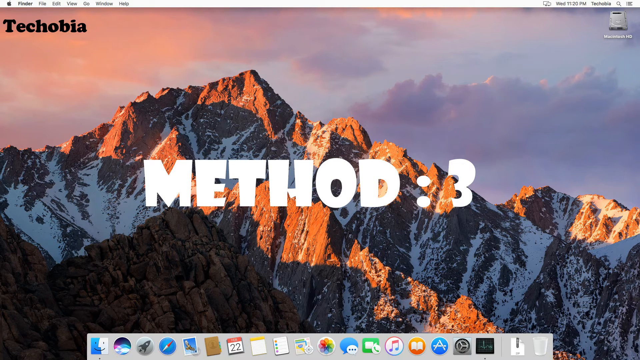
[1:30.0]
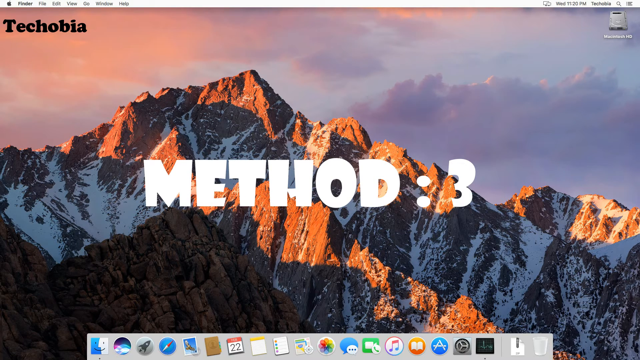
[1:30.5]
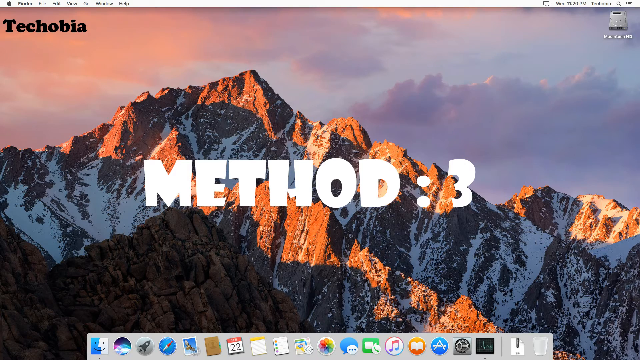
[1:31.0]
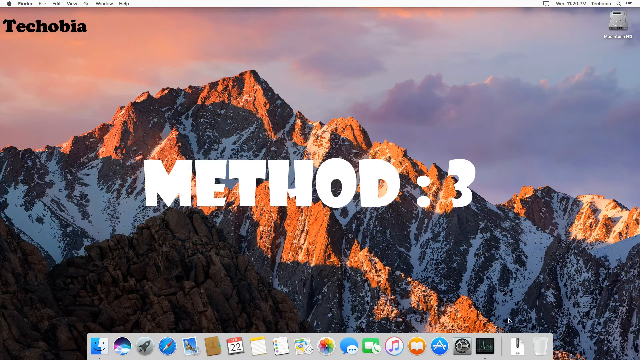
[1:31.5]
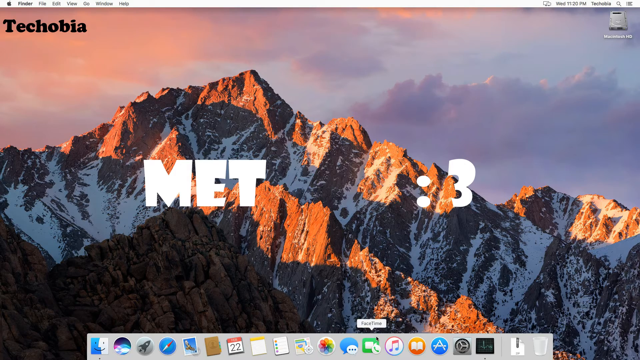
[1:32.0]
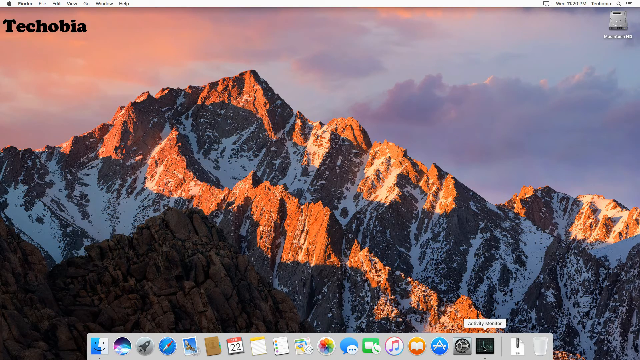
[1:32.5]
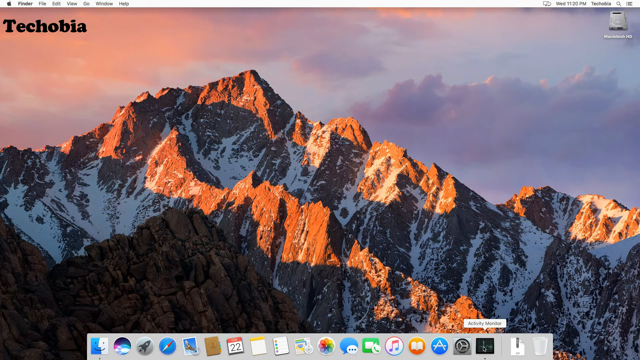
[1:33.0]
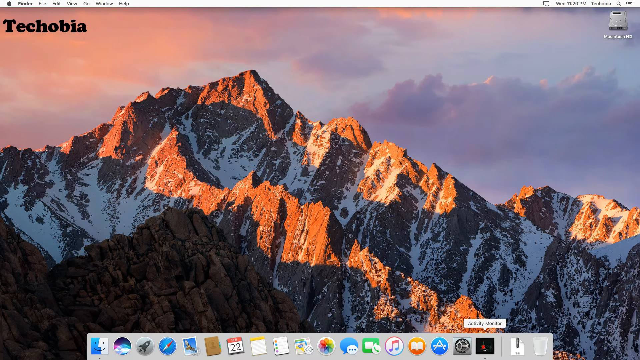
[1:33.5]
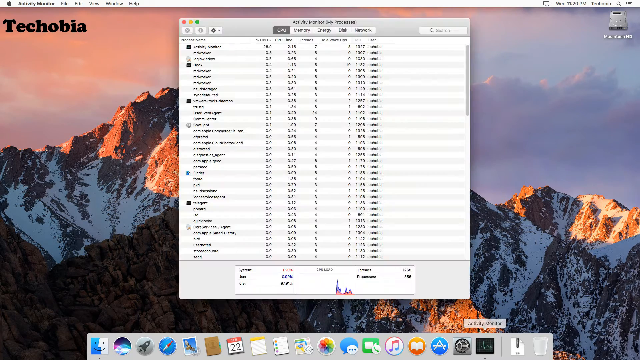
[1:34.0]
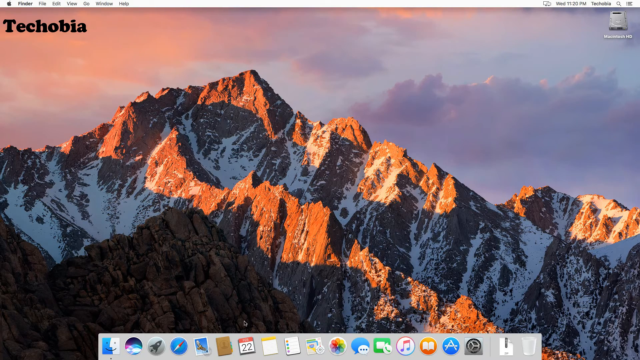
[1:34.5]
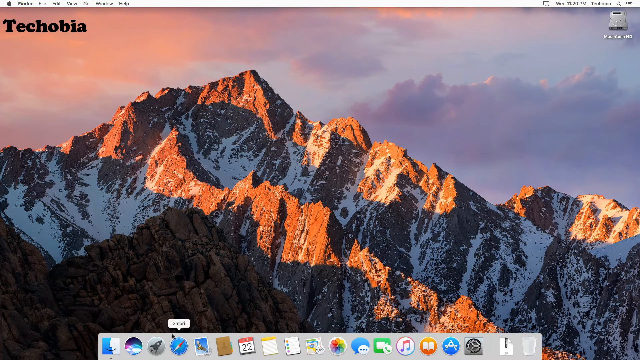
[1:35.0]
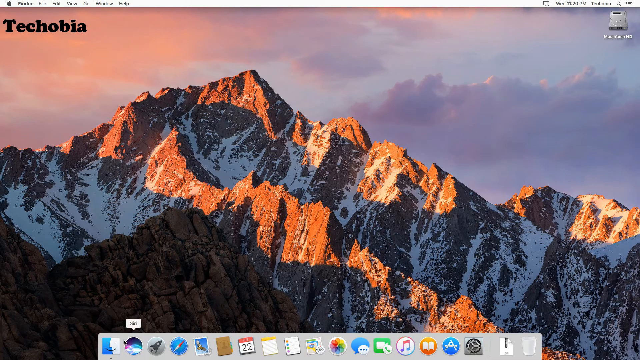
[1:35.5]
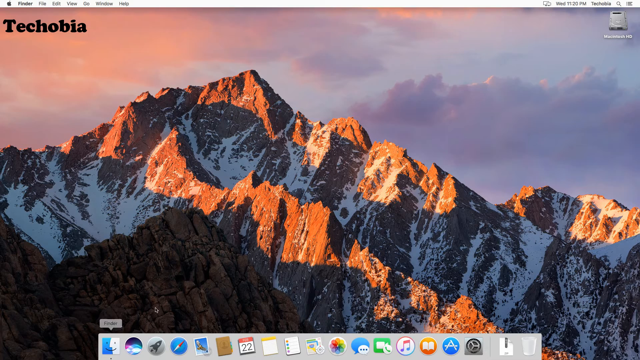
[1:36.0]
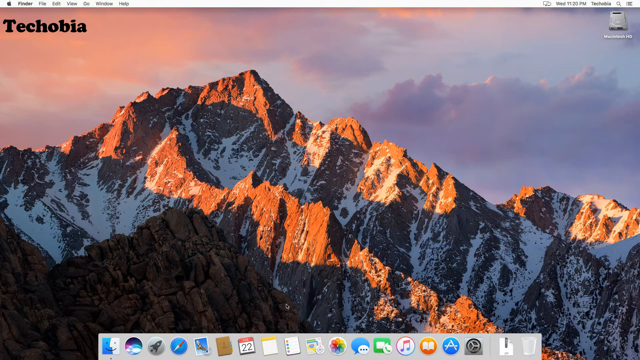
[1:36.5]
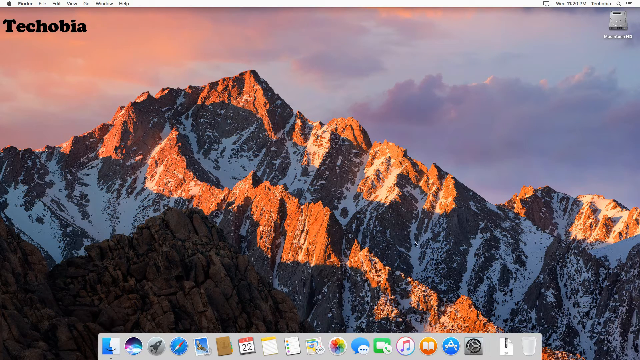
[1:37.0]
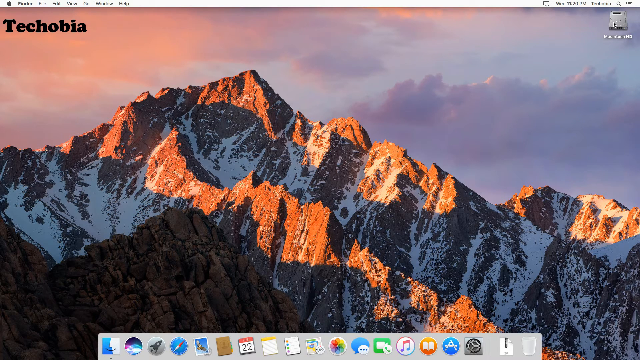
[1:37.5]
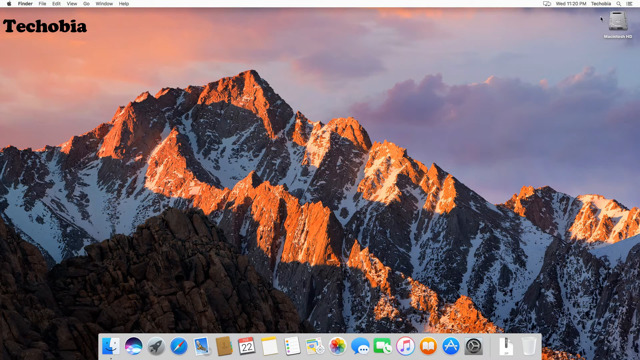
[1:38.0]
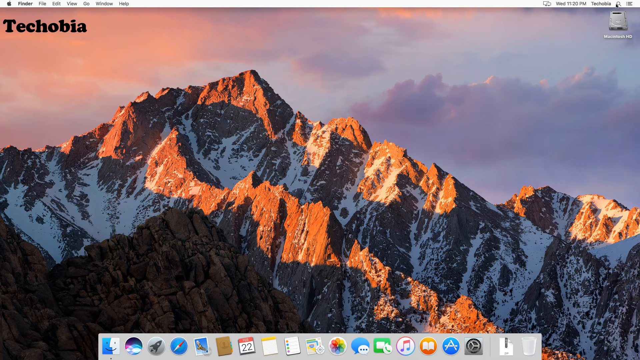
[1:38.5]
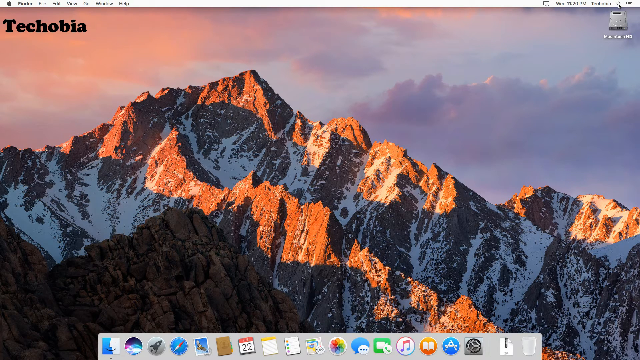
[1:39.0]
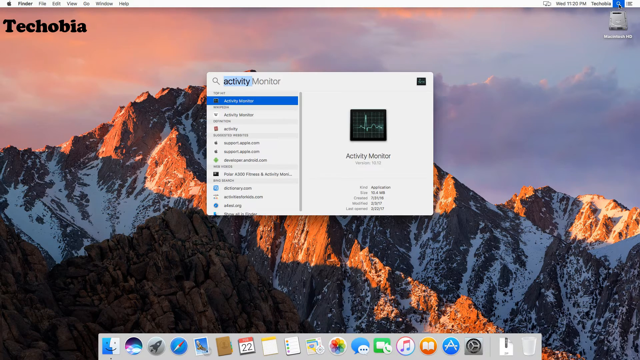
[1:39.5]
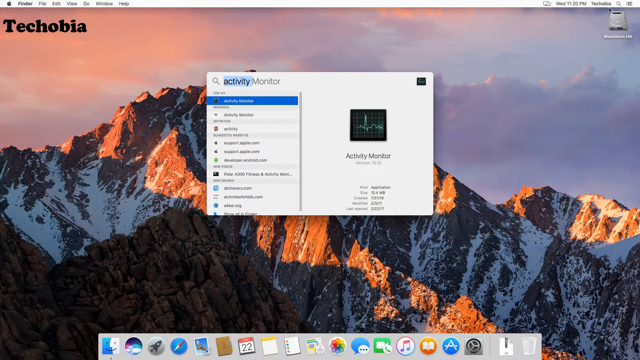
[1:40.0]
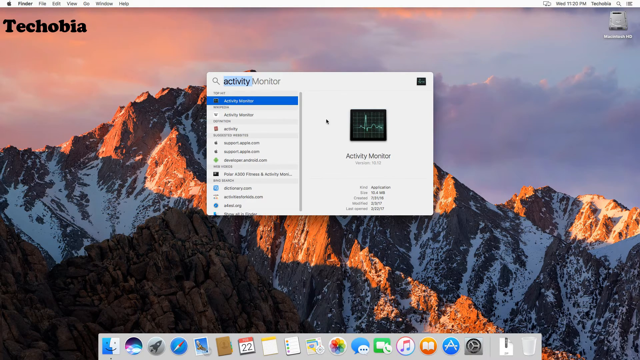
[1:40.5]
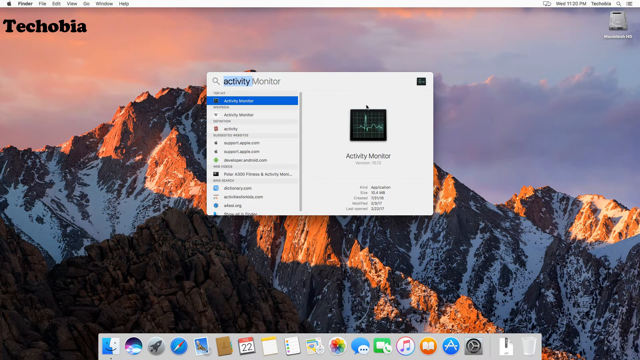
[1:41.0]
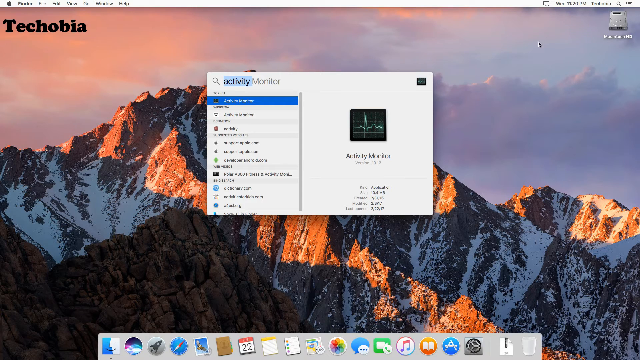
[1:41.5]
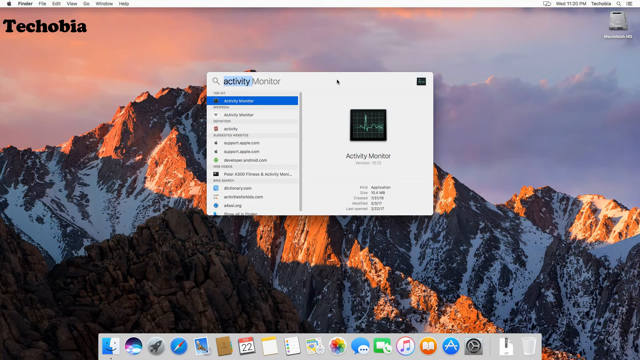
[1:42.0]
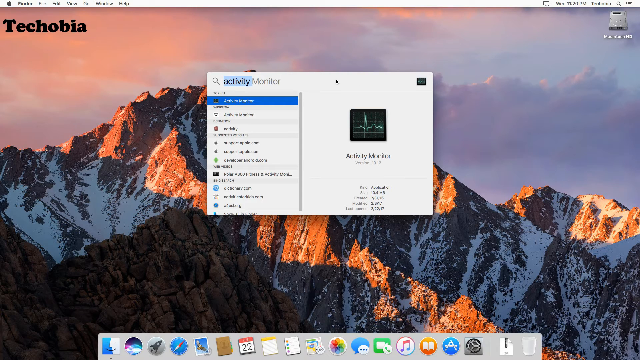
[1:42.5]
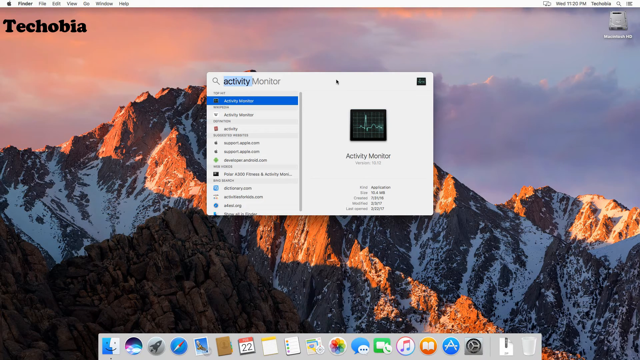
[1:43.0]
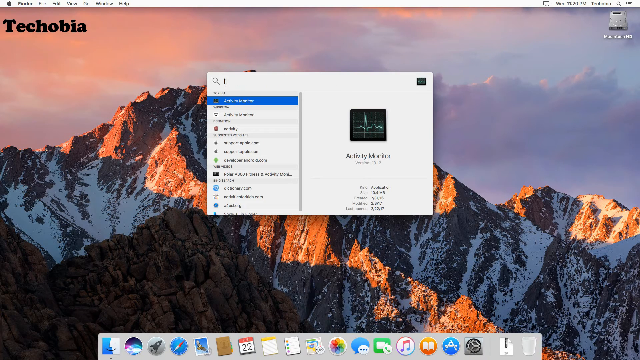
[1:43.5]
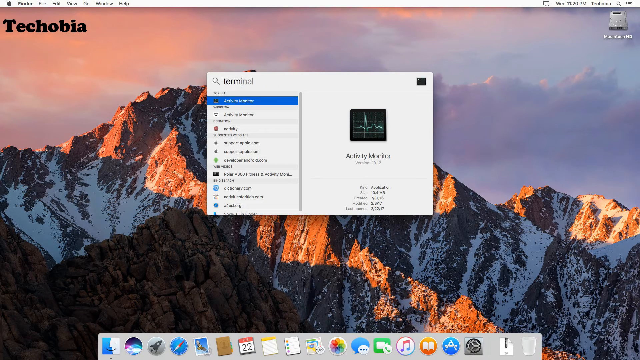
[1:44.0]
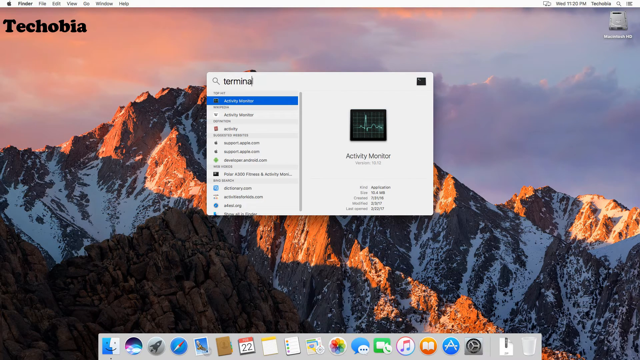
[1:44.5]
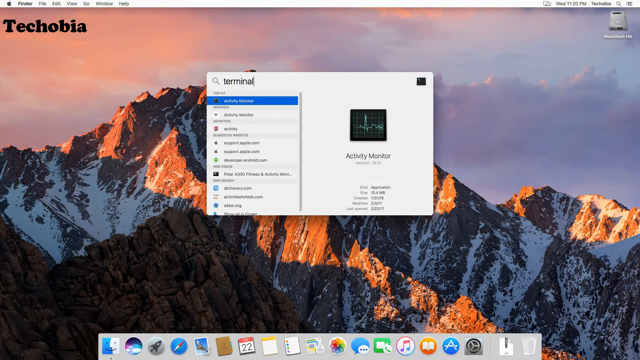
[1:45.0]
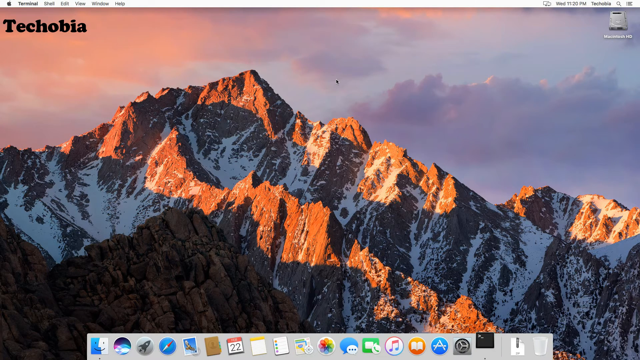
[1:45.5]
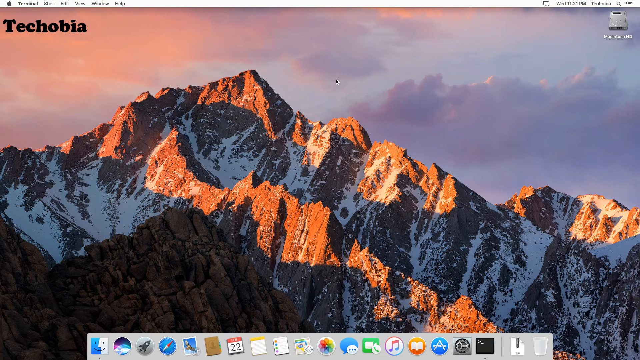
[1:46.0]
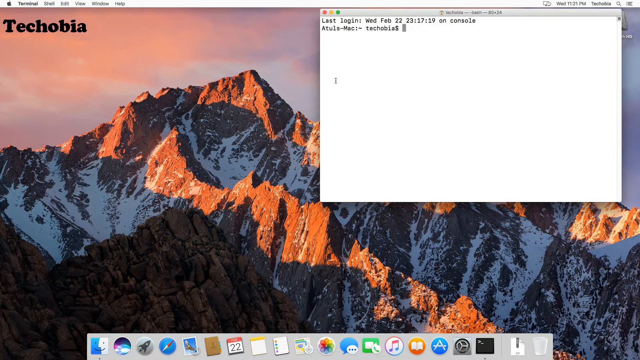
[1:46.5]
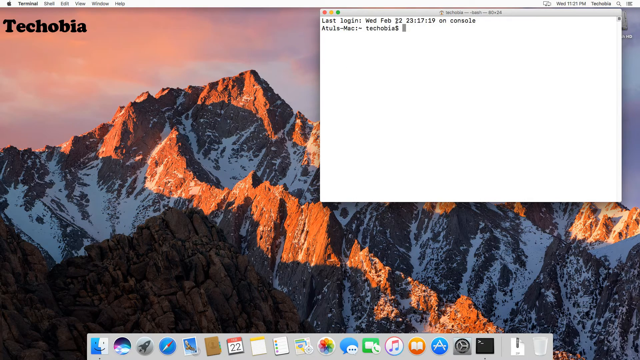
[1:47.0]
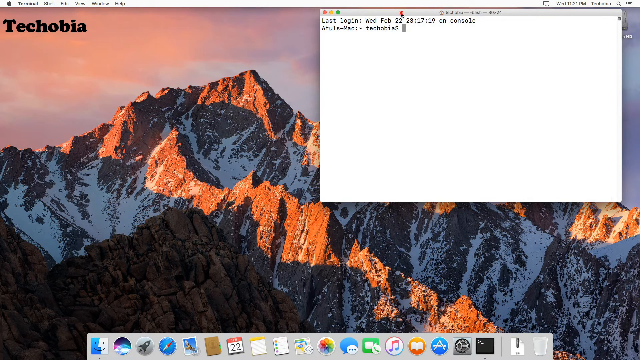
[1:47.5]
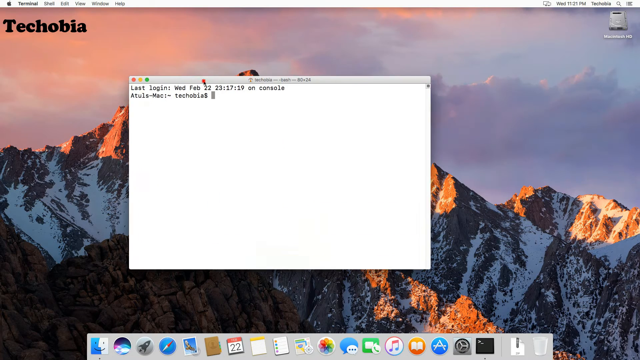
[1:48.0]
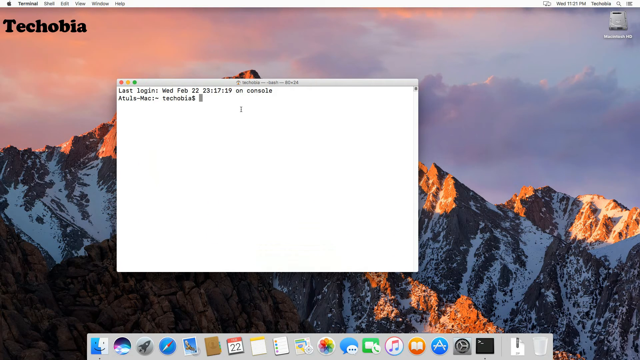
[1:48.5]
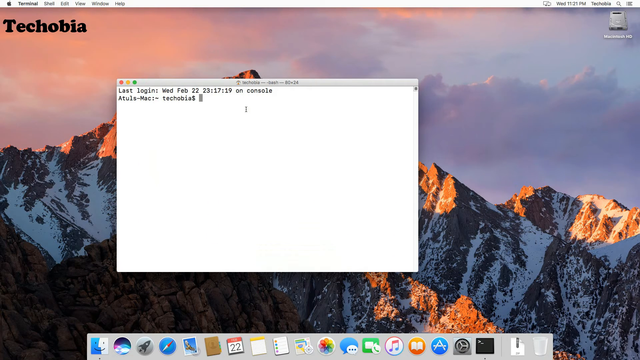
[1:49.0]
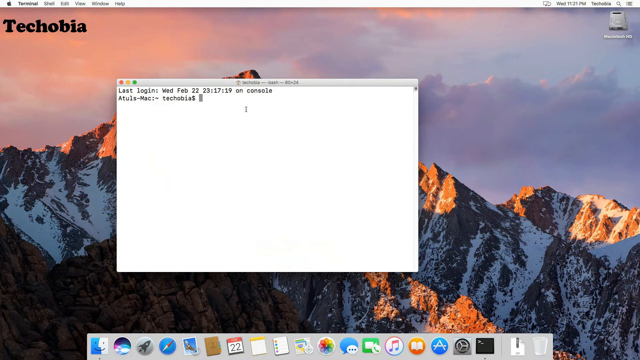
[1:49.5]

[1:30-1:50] The words "method: 3" are on the screen and wipe away after a short time. A menu pops up, flashes quickly, and disappears. His mouse goes to the very bottom of the screen and clicks on something, and a dialog box that says "activity monitor" pops up. It has the activity monitor logo icon on the right and the words "activity monitor," with information such as the version at the bottom of that part of the screen. On the left side is a menu for the activity monitor that cannot be made out, and above it is a search bar that says "activity monitor." He moves his mouse into the search bar and types in the word "terminal." Another box pops up with the words "last login, Wednesday, February 22nd, 23:17:19 on console." Below that it says "ATULS-MAC," "Techobia" and a dollar sign, with the cursor flashing. He opens it up and it shows processes, load average, and a bunch of numbers and information.